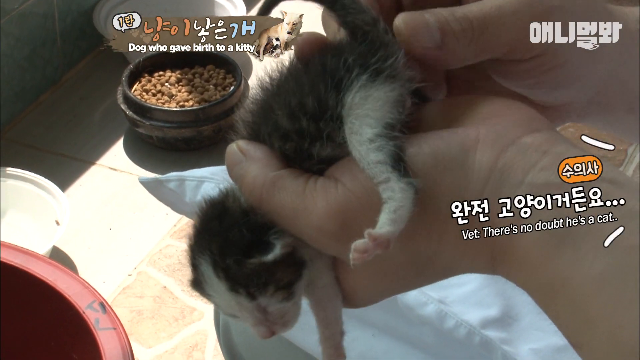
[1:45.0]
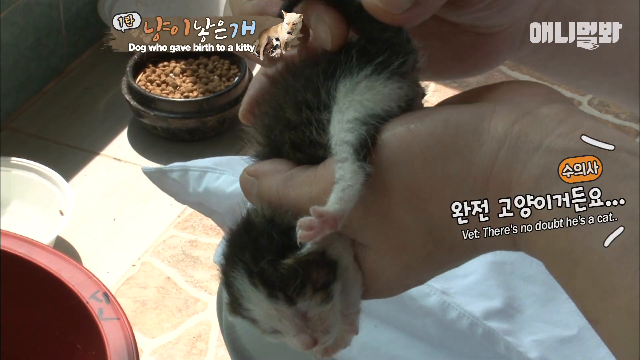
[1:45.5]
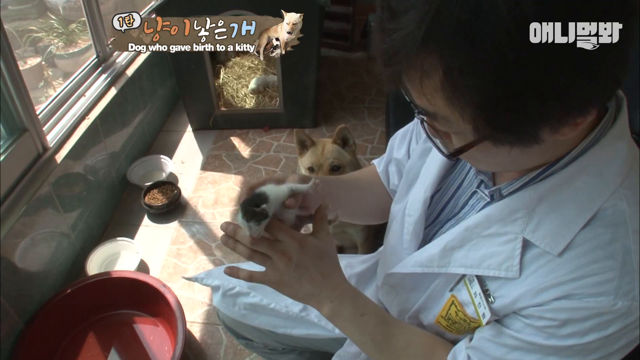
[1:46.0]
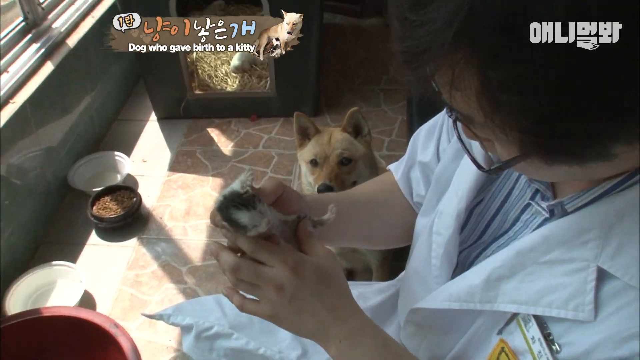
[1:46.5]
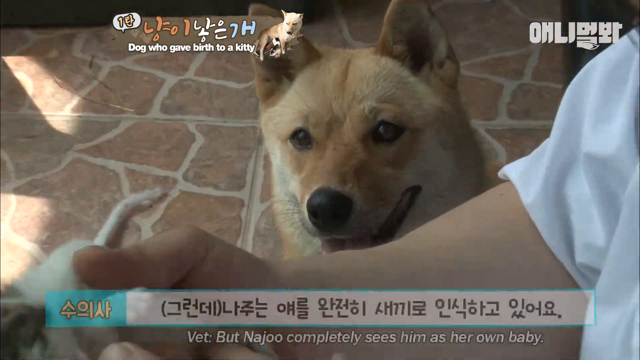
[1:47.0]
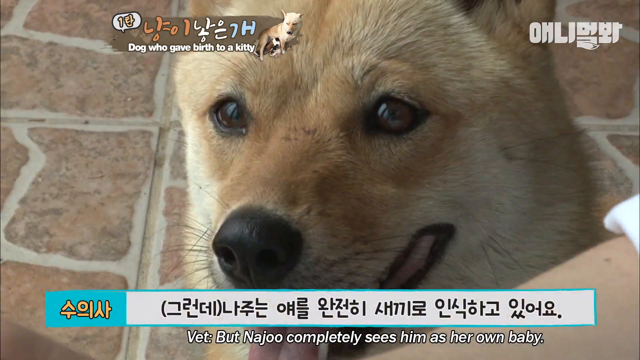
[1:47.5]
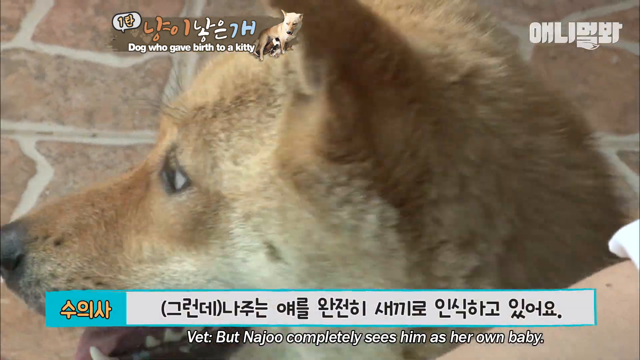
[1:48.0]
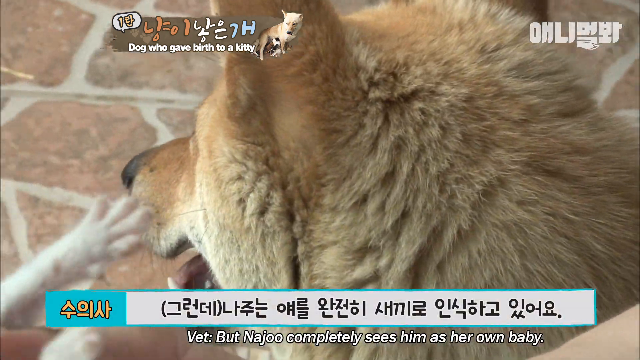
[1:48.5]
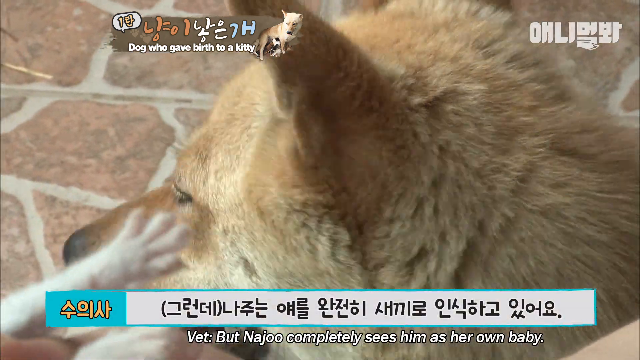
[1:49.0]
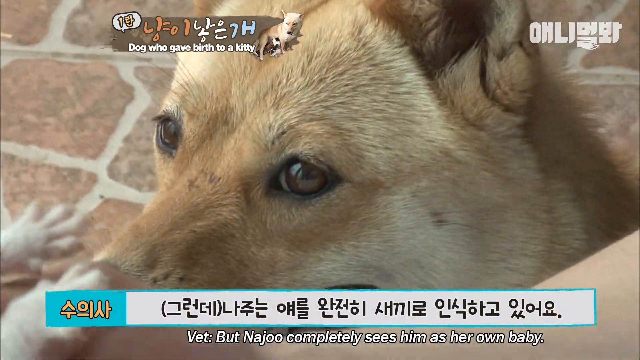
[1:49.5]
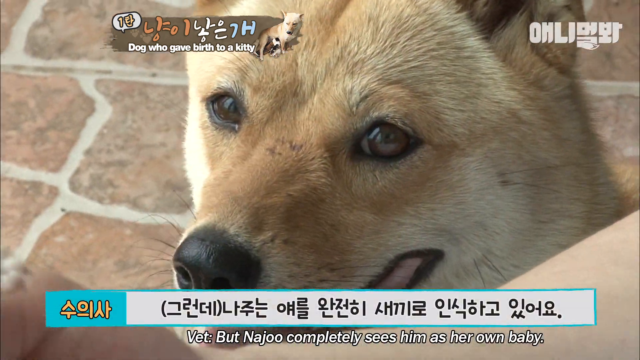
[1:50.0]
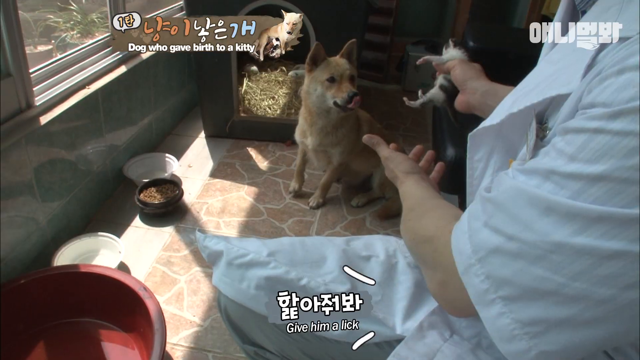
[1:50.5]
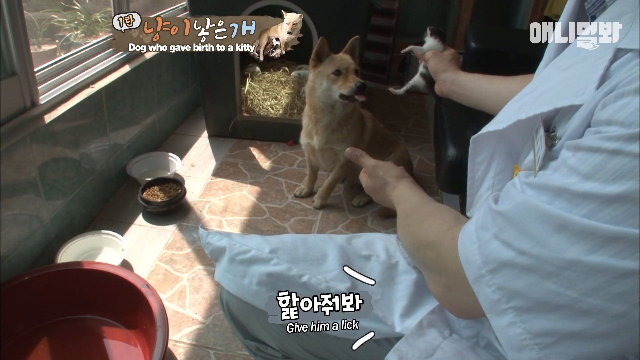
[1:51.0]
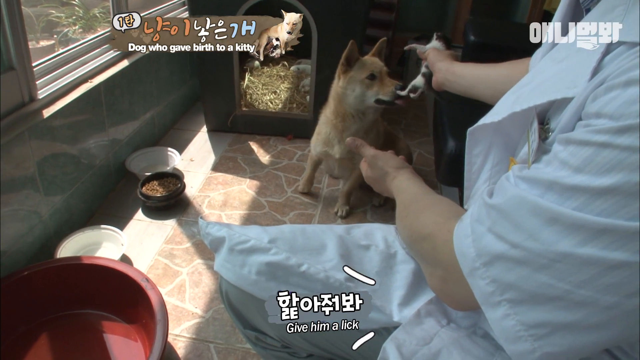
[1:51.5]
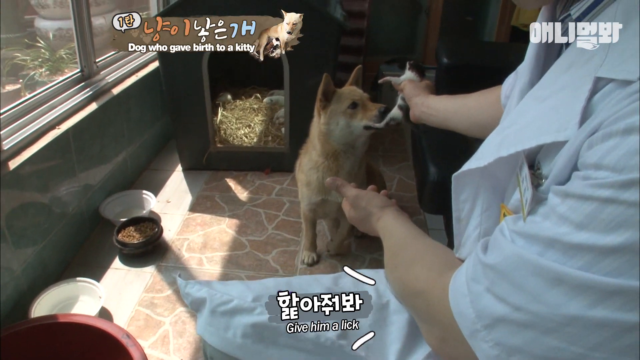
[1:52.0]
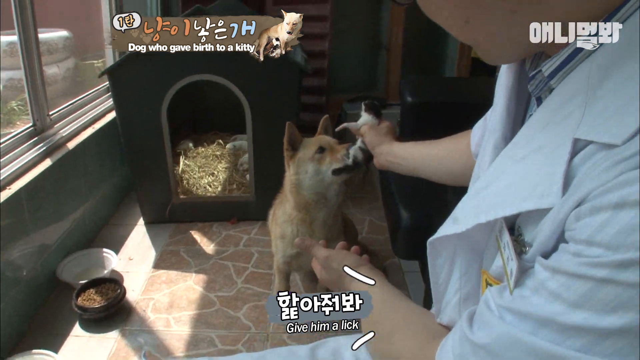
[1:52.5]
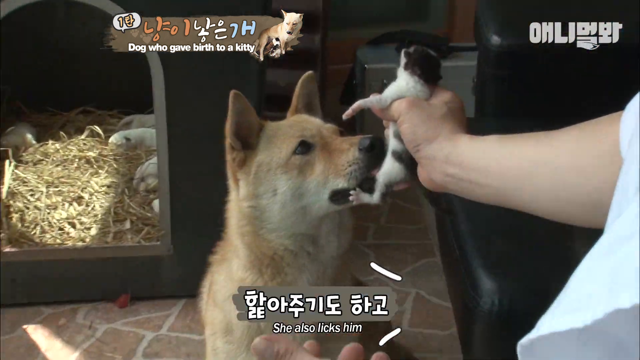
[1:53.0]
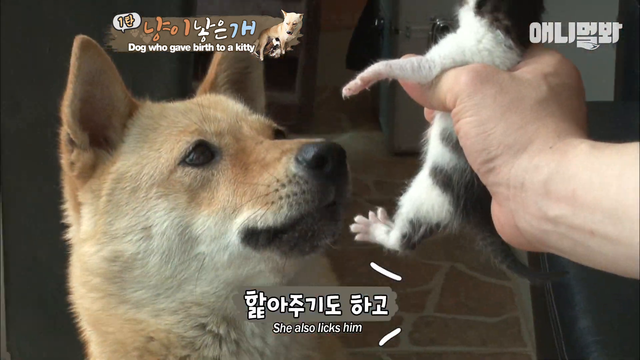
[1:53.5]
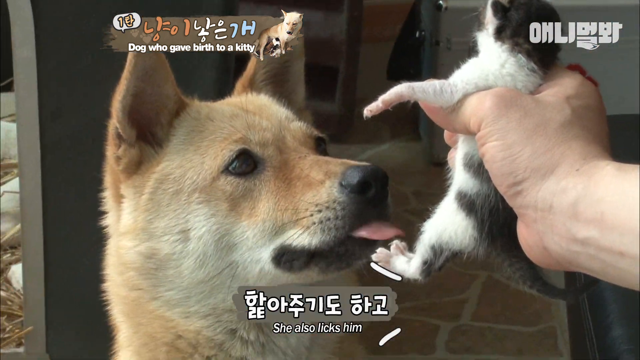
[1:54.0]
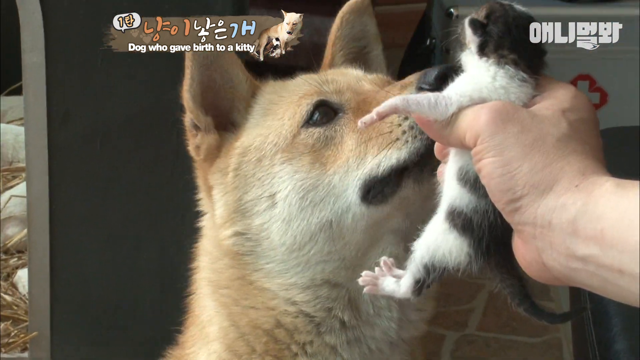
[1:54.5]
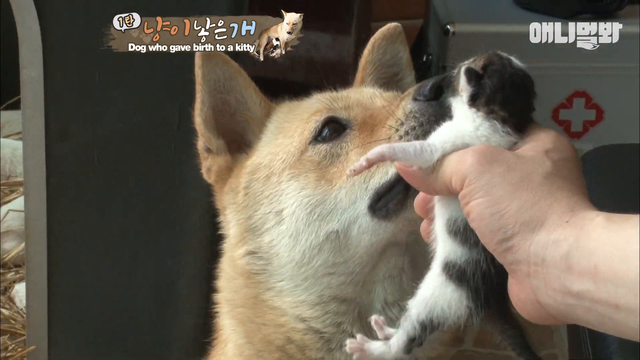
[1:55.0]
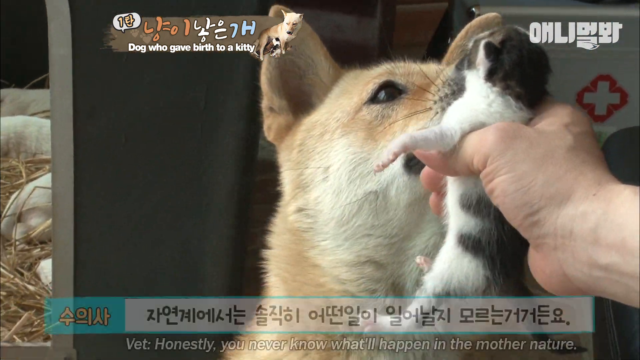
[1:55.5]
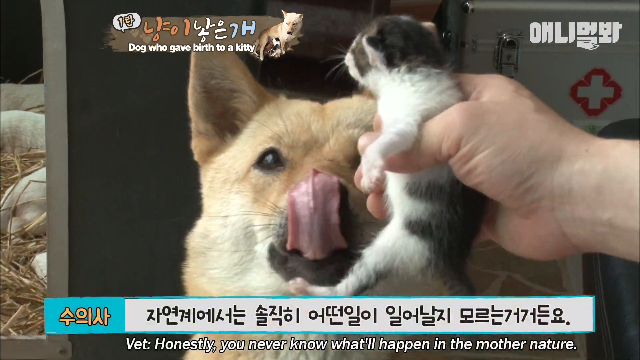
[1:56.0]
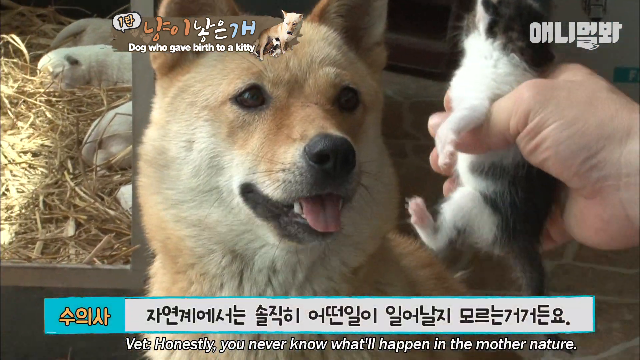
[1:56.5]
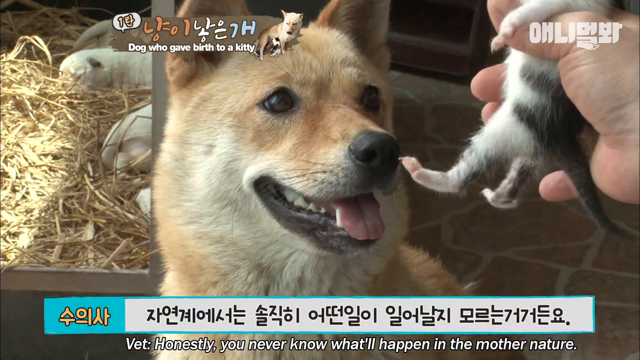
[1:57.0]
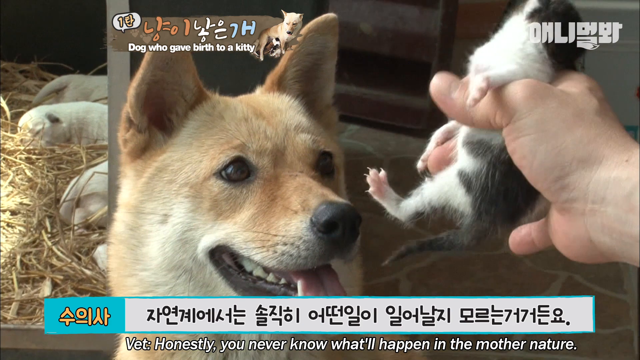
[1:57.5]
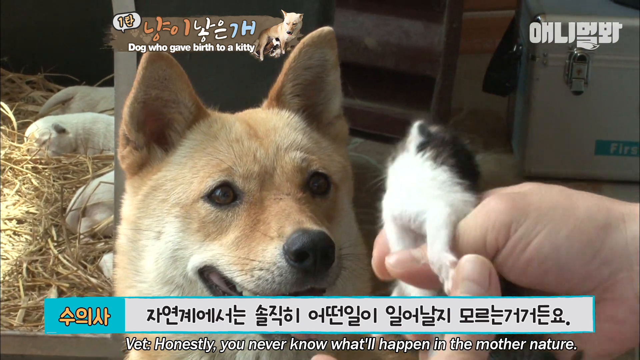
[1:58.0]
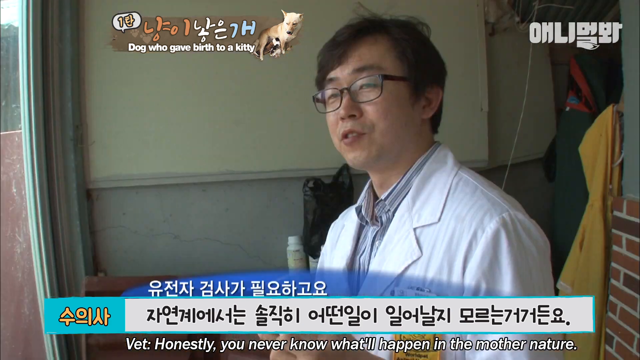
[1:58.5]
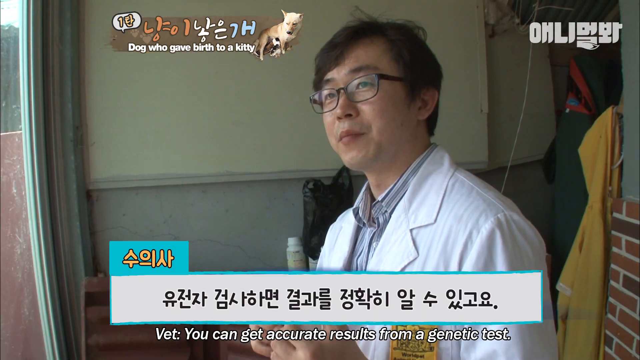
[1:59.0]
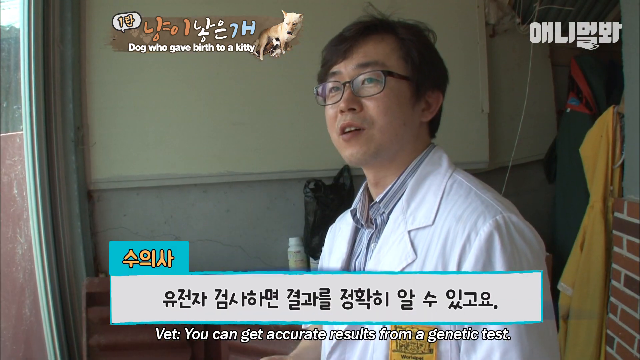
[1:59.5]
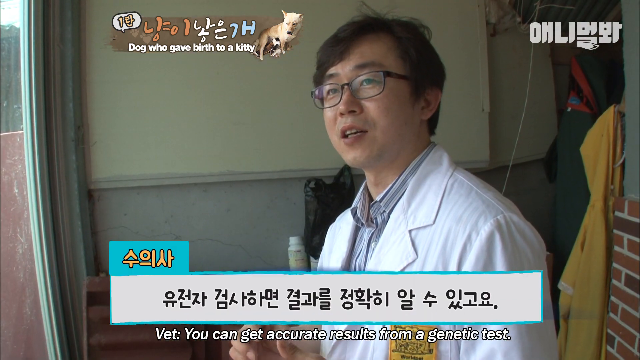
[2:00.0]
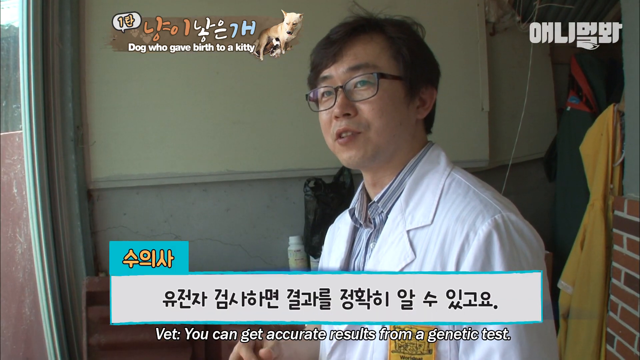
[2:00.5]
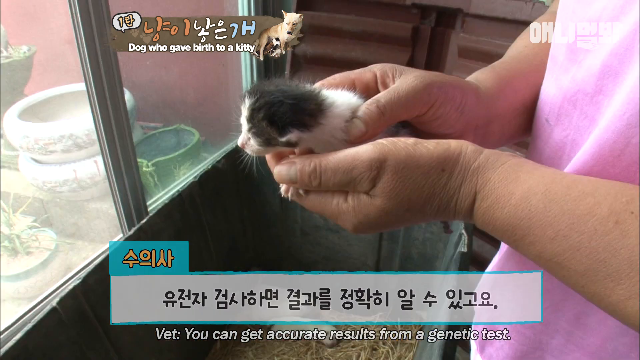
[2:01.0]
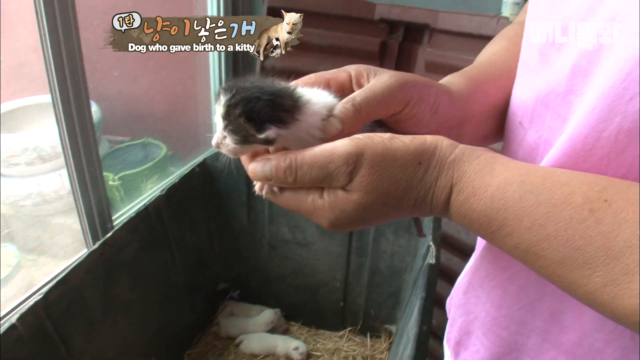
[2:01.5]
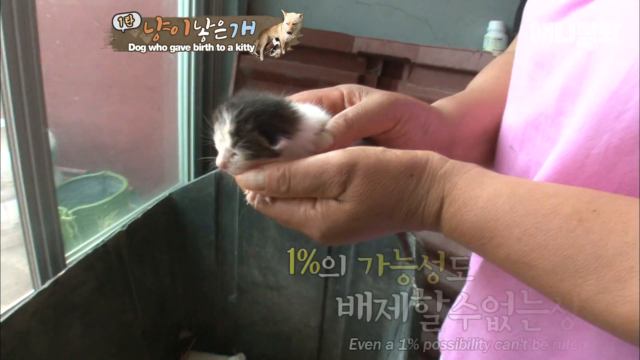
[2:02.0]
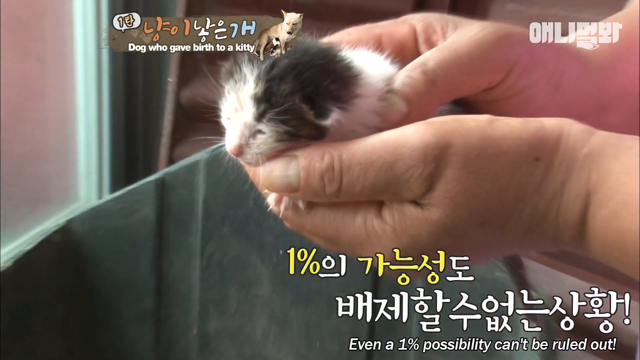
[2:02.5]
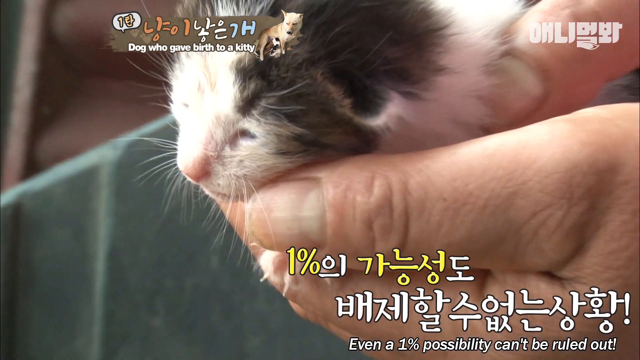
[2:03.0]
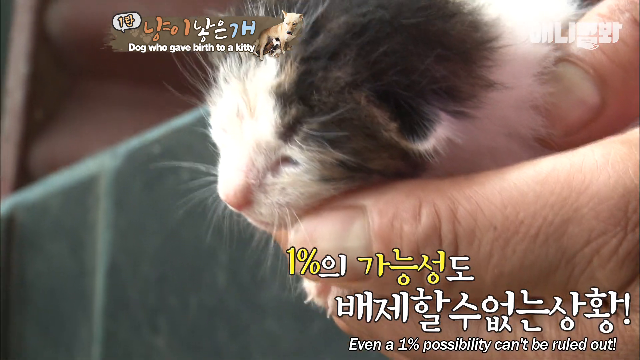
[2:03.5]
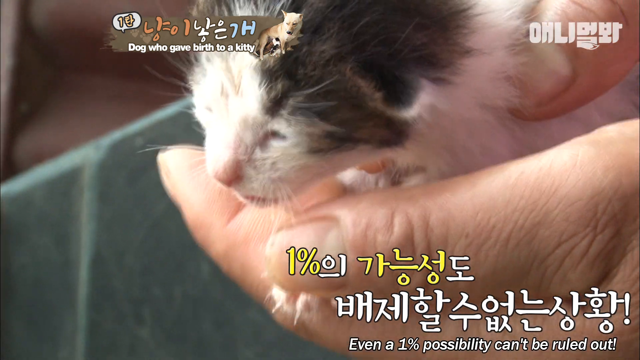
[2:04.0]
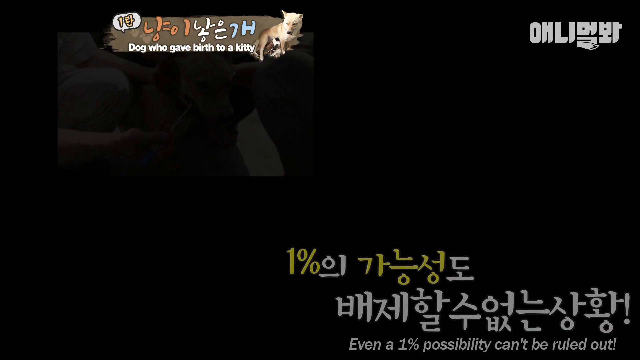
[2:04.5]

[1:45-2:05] In a medical setting, medical specialists hold a kitten with an adult dog sitting next to them. Chinese and English subtitles discuss the kitten, the dog and their bond; the subtitles say that the dog sees the kitten as its own baby. The dog licks the kitten and looks at it in a loving manner. The doctor is shown talking from different angles, inside a building during daytime, and at one point another person in the same setting discusses the same situation, talking about getting a genetic test to make sure the kitten did not come from the dog naturally.